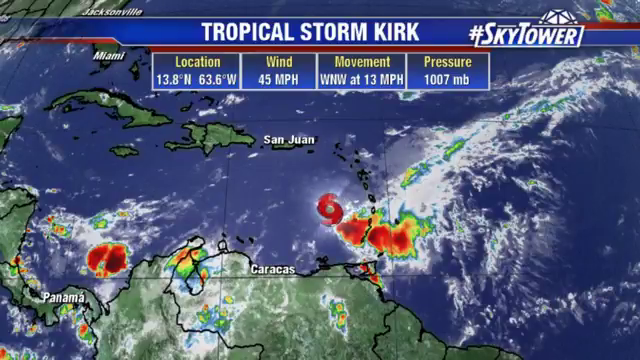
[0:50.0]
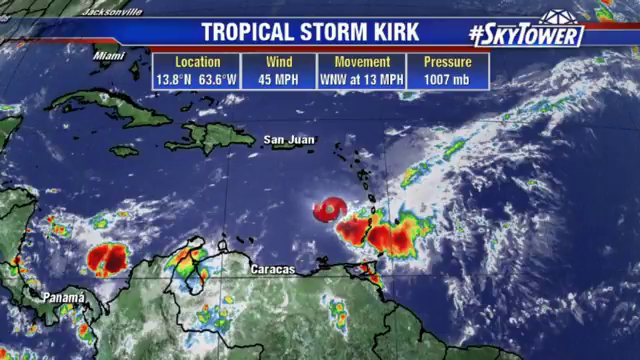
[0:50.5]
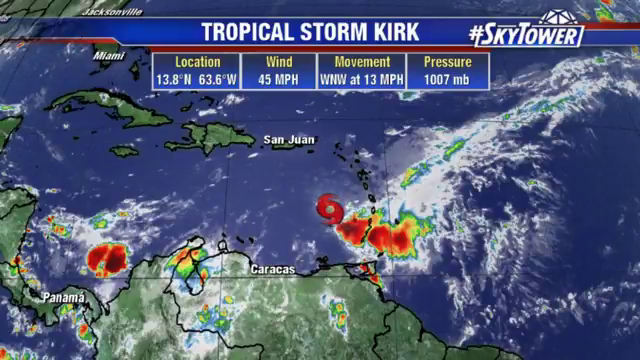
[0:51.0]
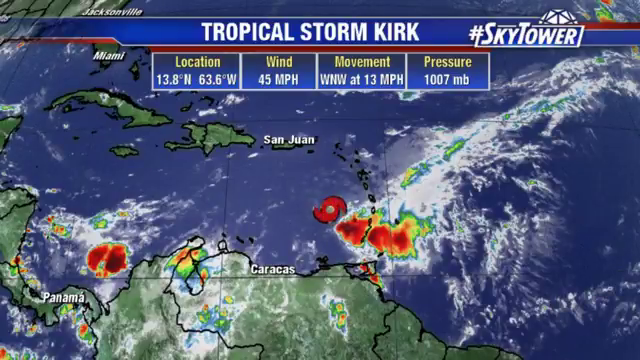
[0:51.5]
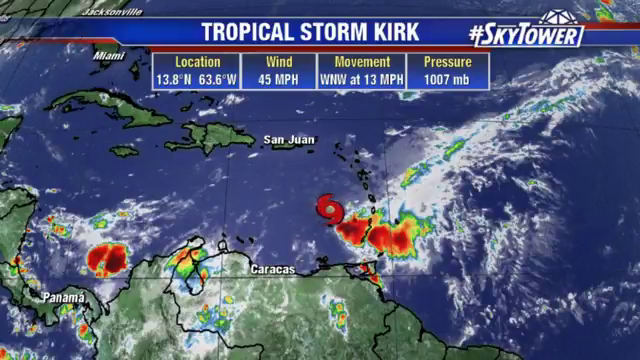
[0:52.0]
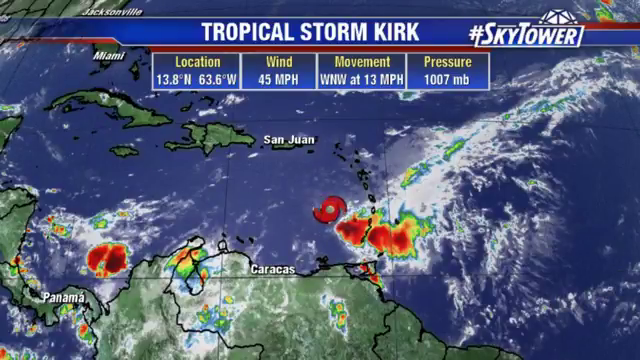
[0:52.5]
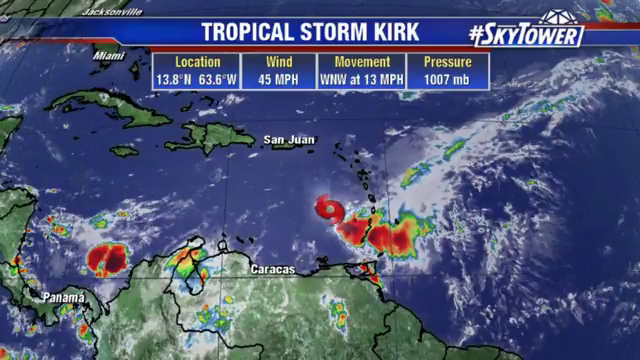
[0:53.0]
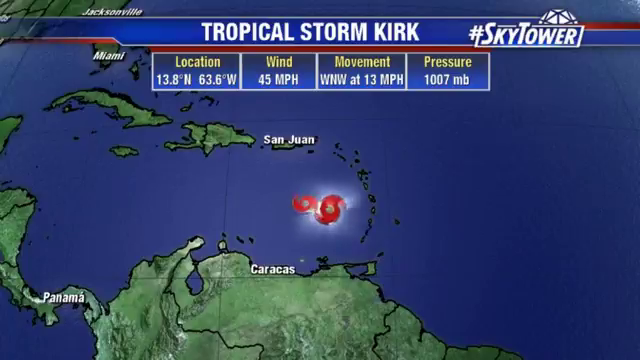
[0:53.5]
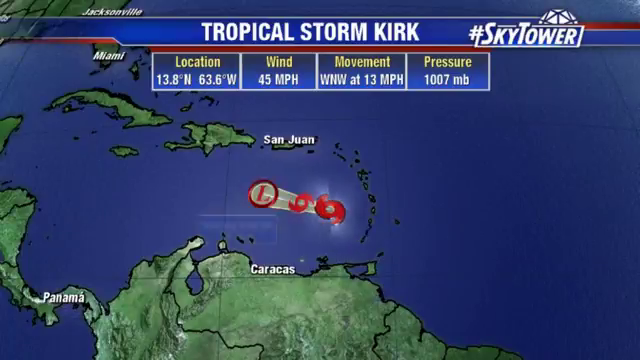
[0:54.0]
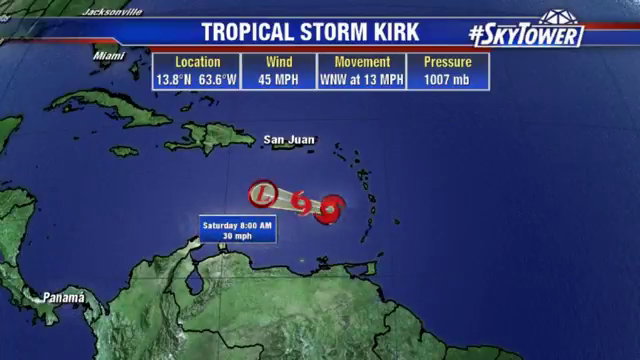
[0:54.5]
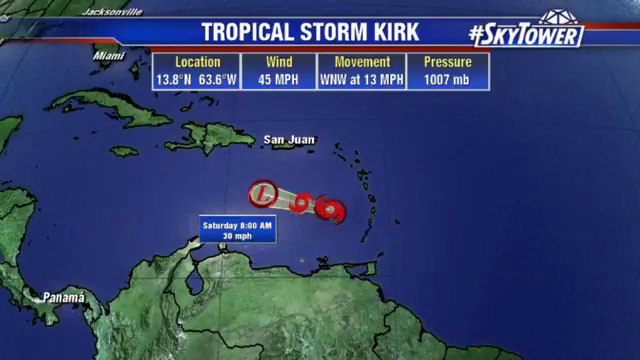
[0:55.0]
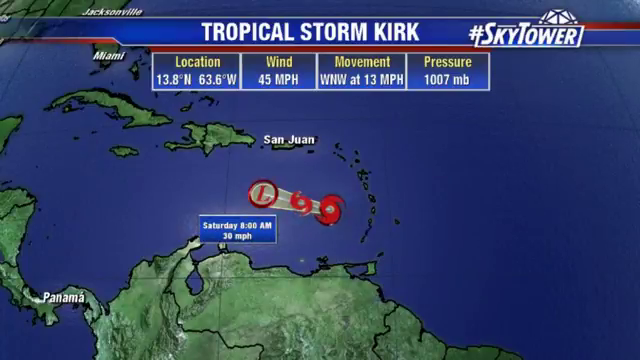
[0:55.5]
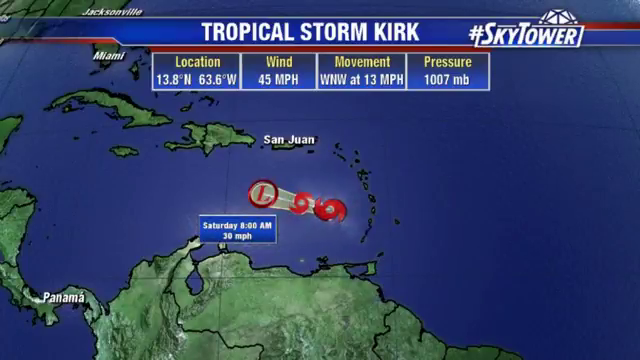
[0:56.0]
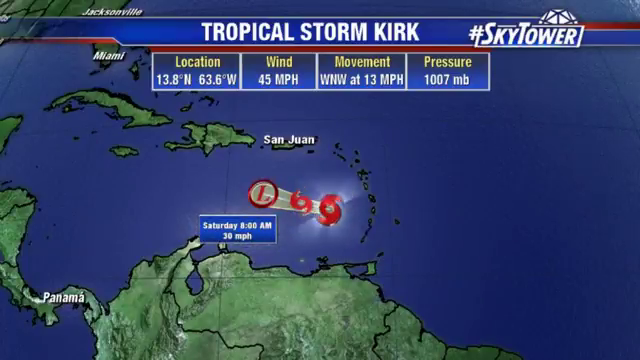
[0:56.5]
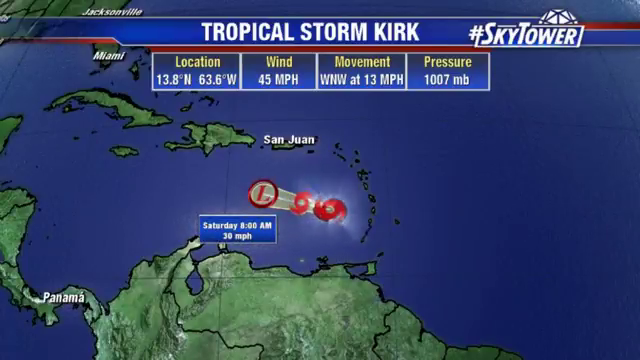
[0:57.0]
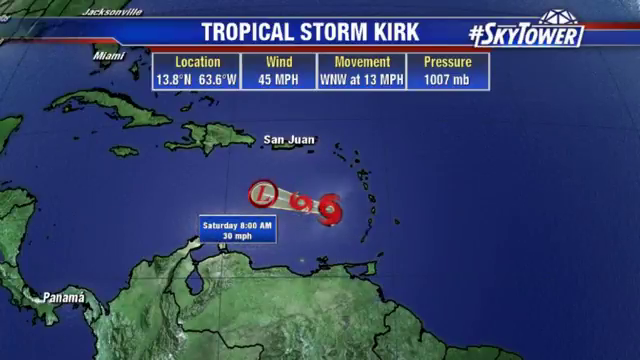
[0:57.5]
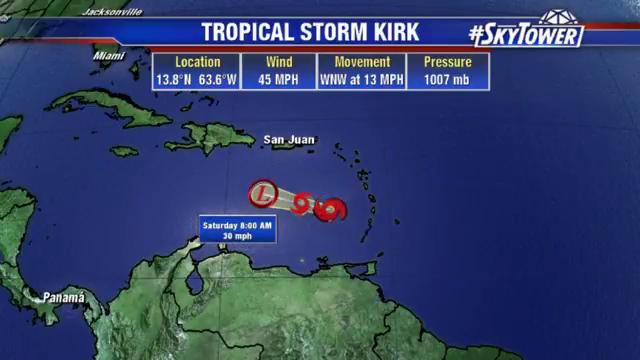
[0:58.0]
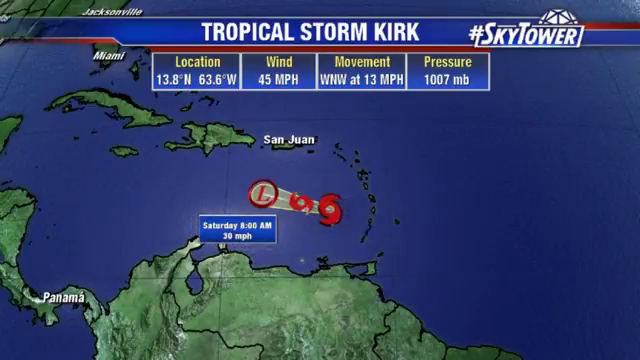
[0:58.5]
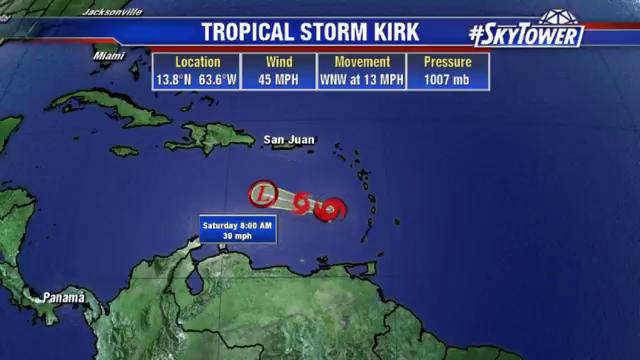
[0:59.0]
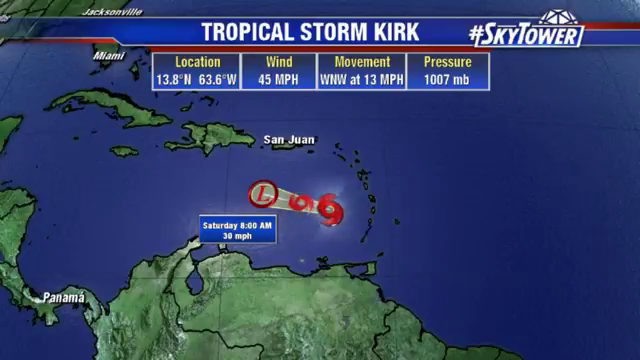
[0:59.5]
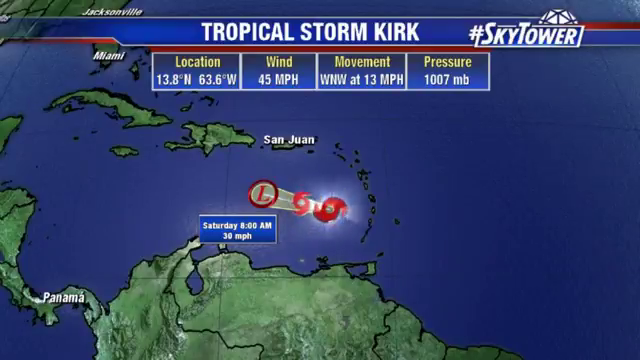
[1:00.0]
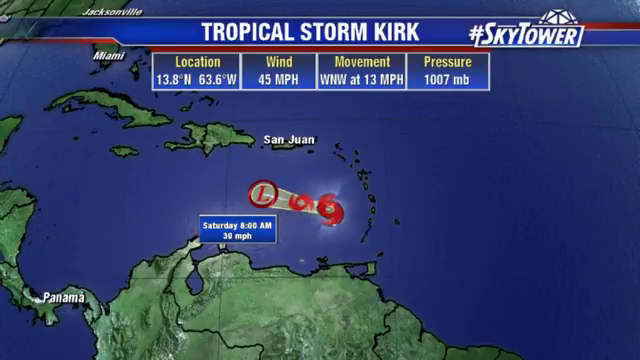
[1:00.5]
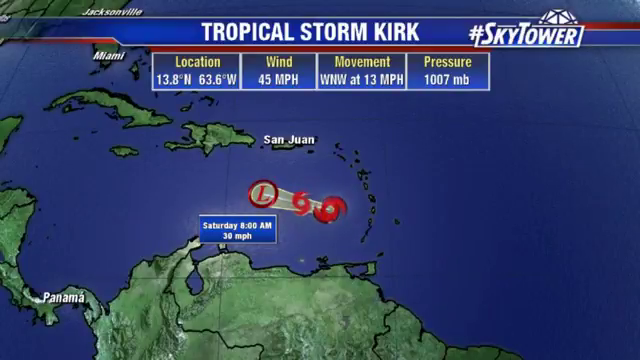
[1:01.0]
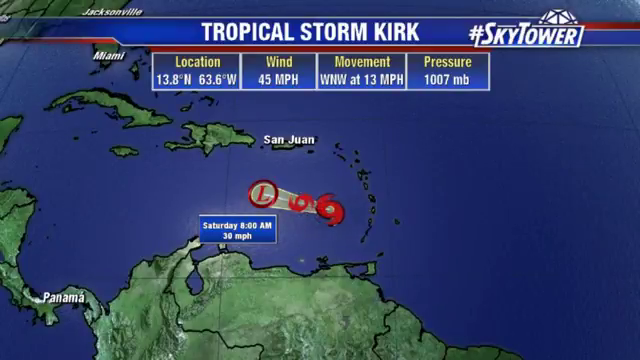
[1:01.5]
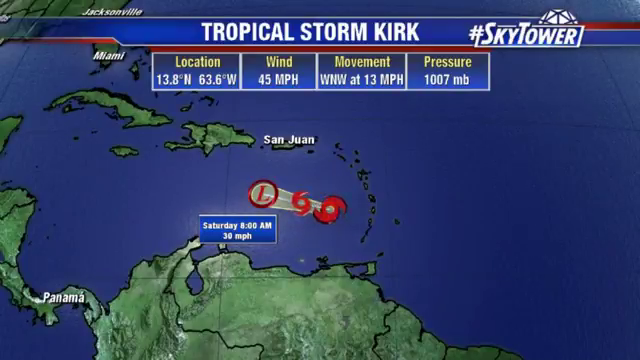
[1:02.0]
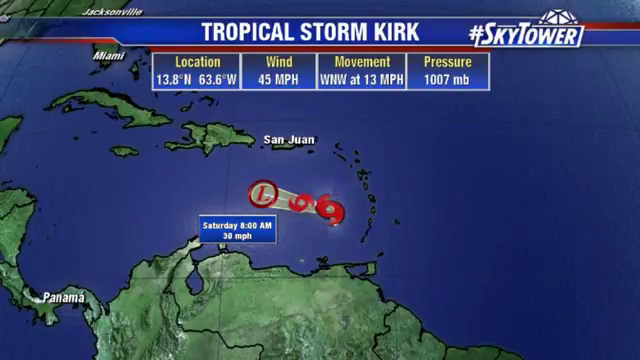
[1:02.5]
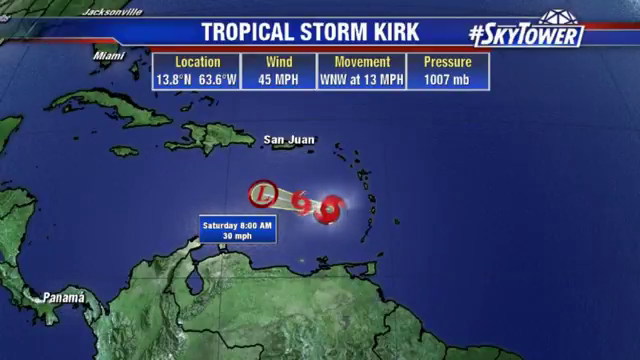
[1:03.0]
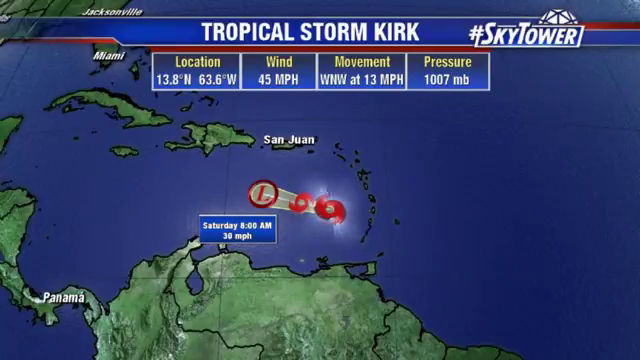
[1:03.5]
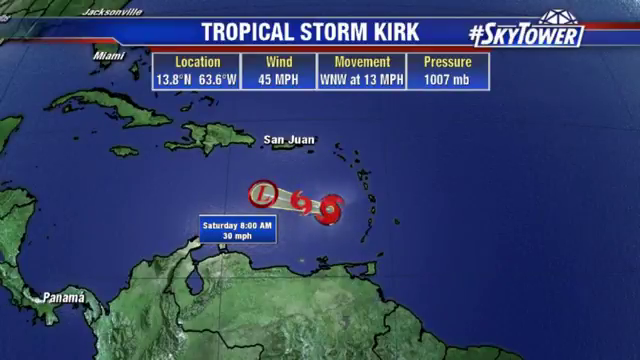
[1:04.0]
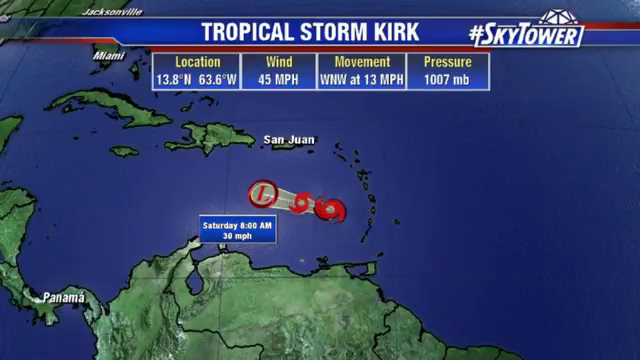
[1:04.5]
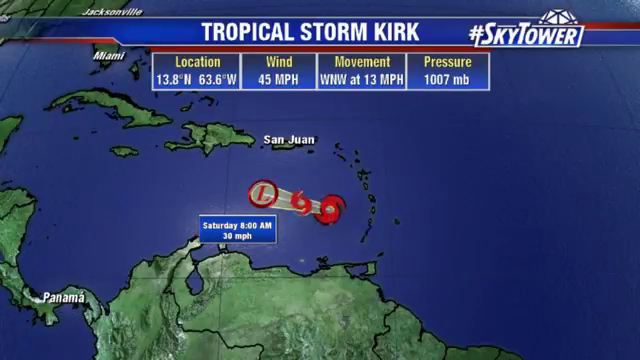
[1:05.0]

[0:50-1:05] The number nine icon of Tropical Storm Kirk is still spinning anti-clockwise. Some of the islands and places in the sea have big red-coloured splodges on them. The number nine icon now points off in a sort of west-northwest direction, and the map indicates that by Saturday 8 a.m. it will have traveled to just south of San Juan; this information, Saturday 8 a.m. at 30 miles an hour, is shown in a small blue box in the bottom left of the screen. Two number nines now spin anti-clockwise, underneath the islands in and around San Juan. On the far left, to the left of them, is a small red circle with the letter L inside it. Underneath, a small grey triangle covers all the points of the three icons.